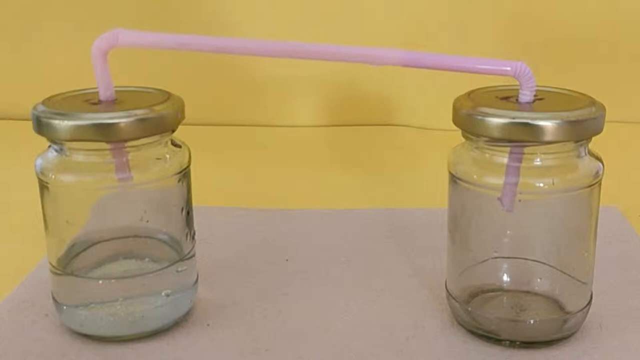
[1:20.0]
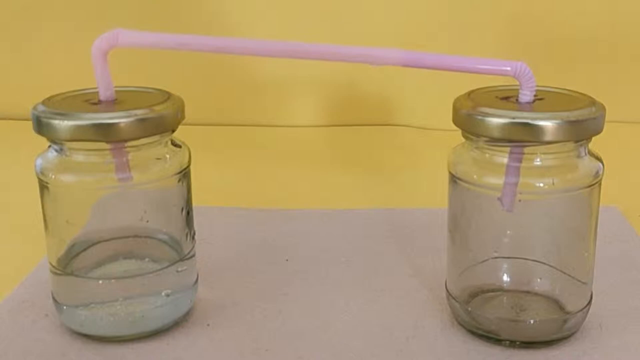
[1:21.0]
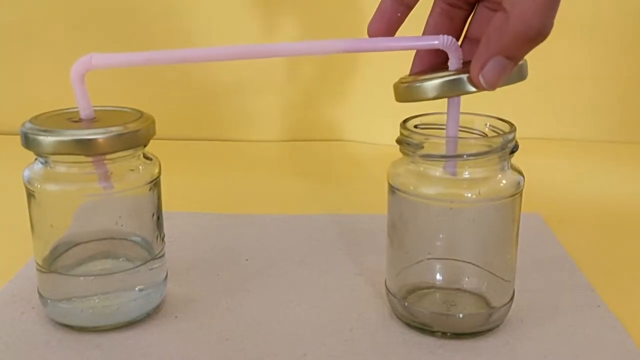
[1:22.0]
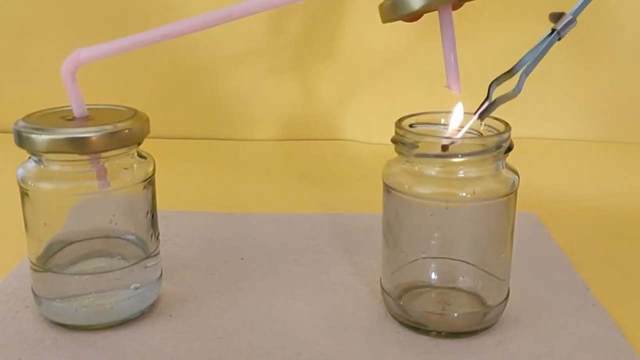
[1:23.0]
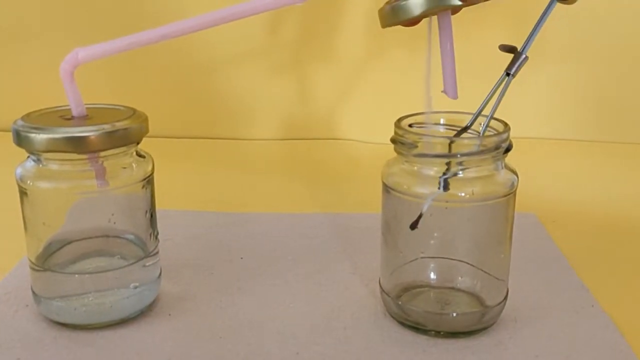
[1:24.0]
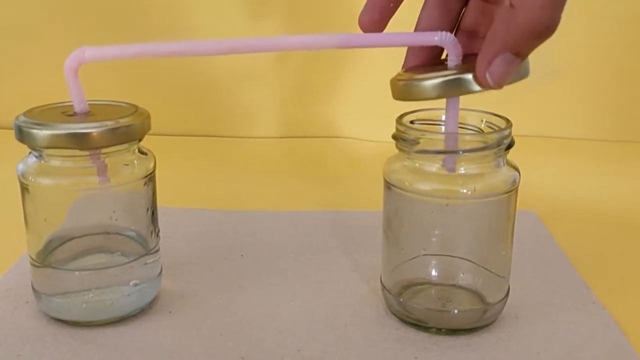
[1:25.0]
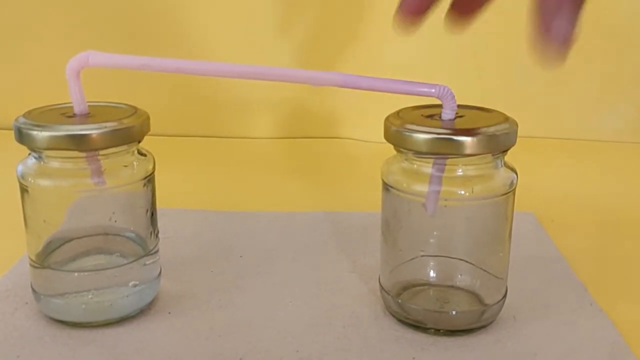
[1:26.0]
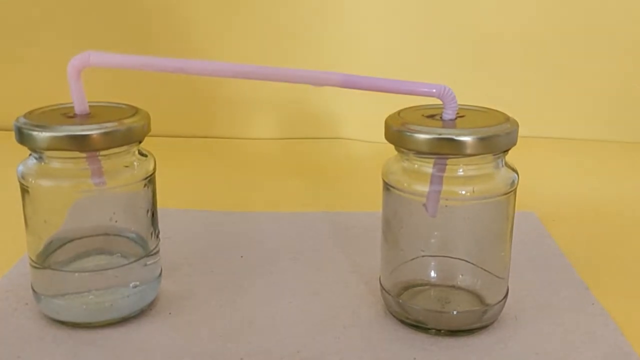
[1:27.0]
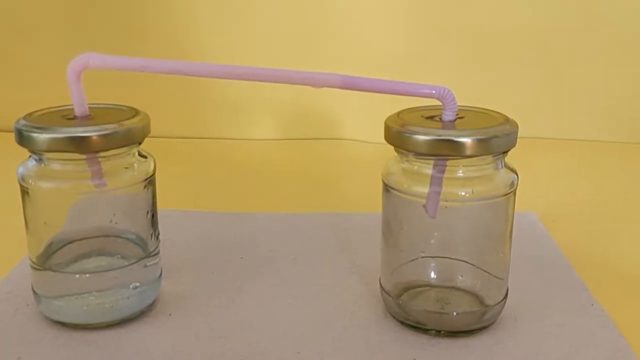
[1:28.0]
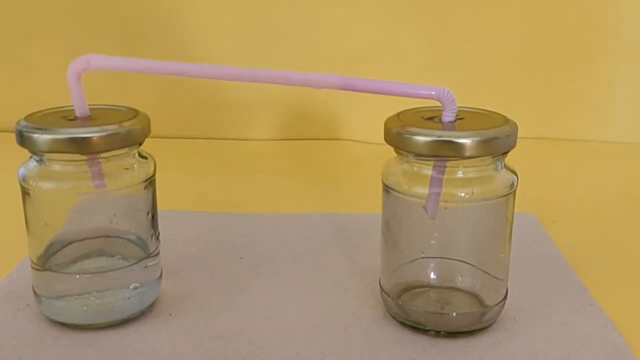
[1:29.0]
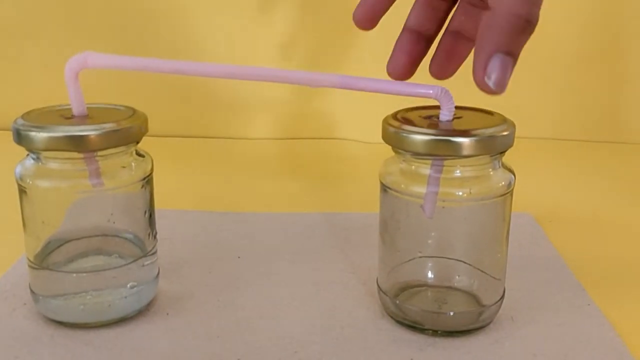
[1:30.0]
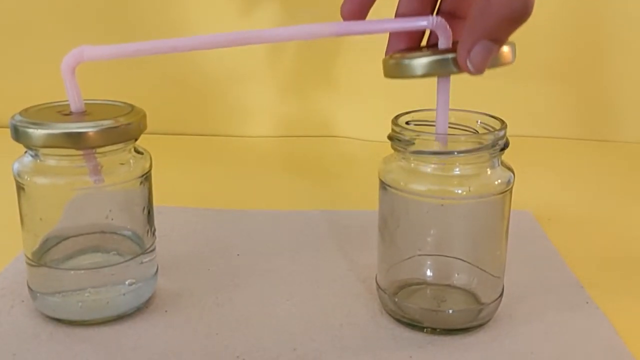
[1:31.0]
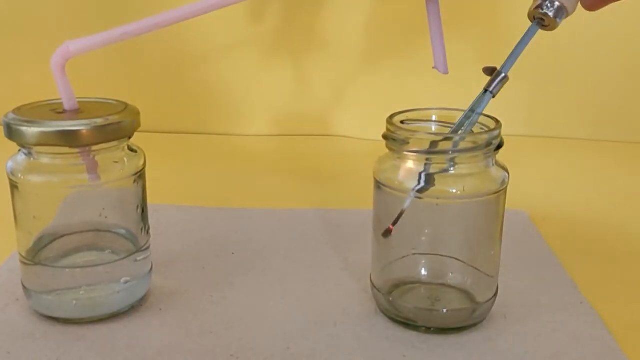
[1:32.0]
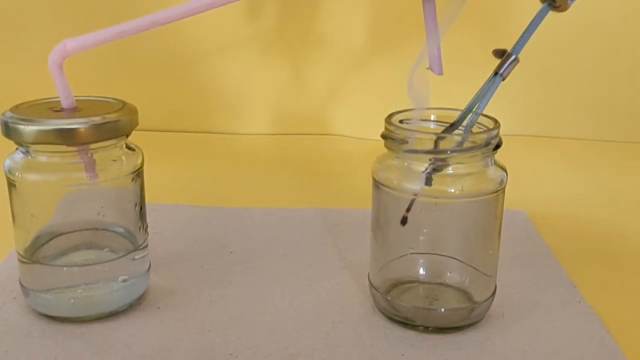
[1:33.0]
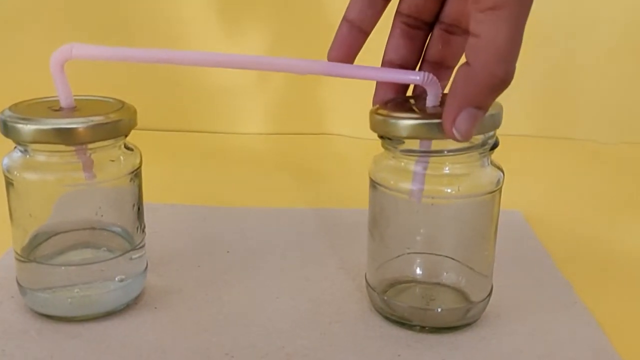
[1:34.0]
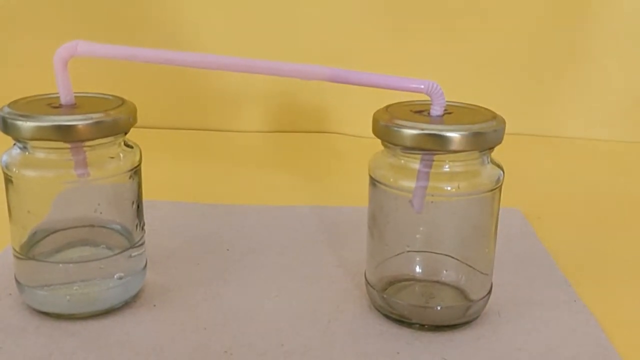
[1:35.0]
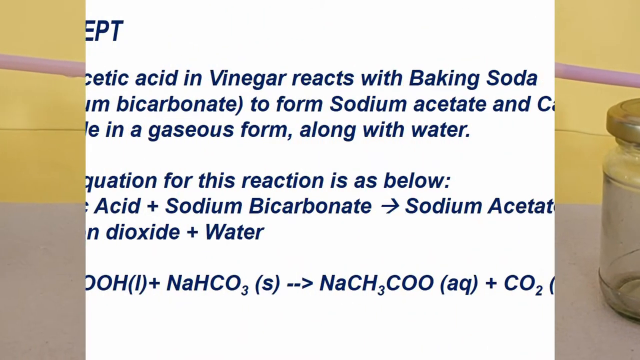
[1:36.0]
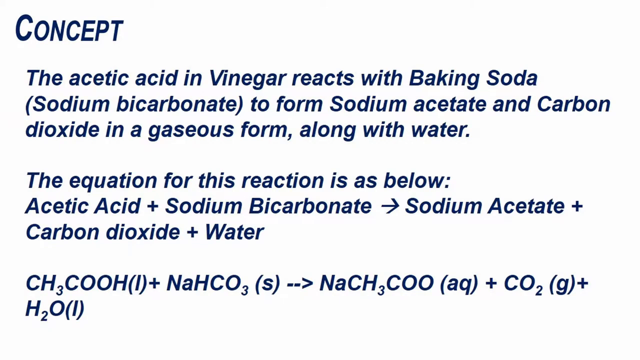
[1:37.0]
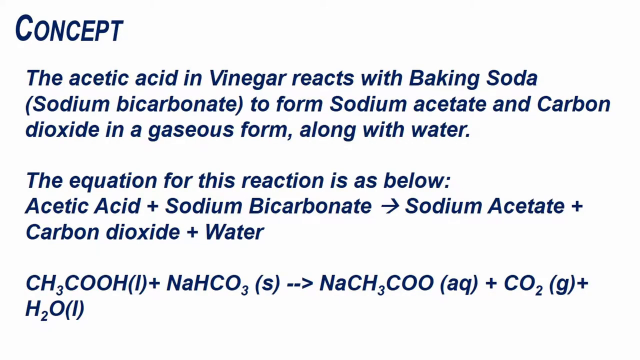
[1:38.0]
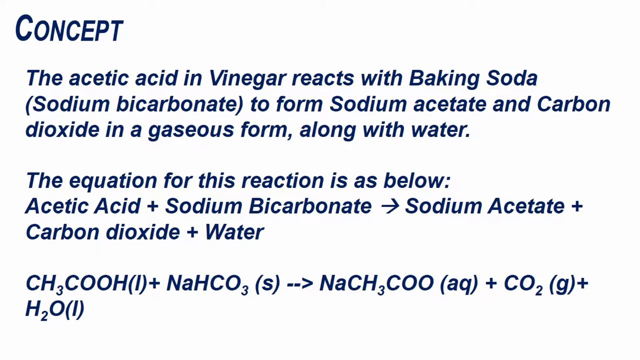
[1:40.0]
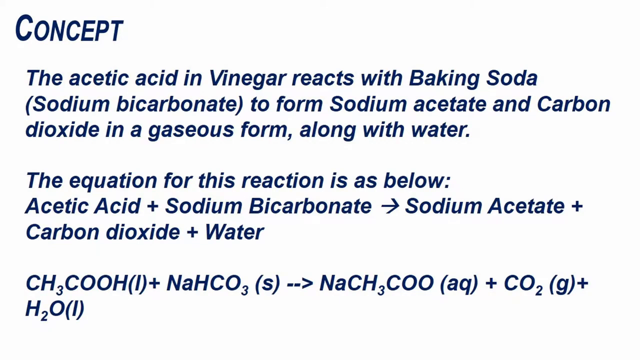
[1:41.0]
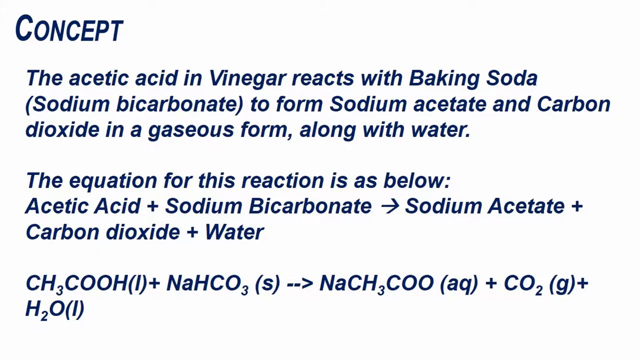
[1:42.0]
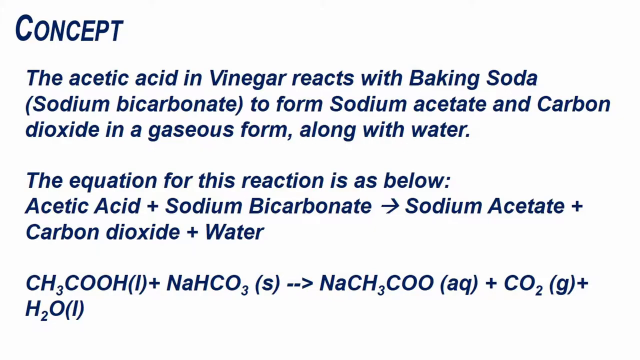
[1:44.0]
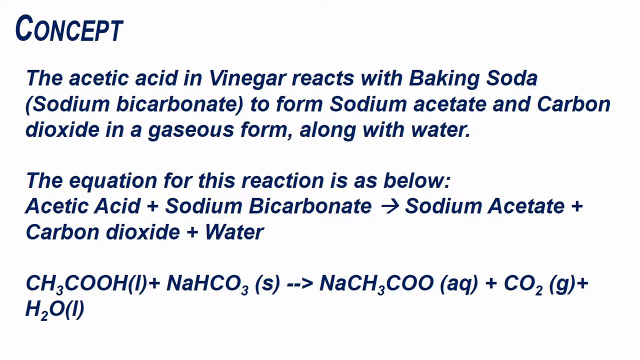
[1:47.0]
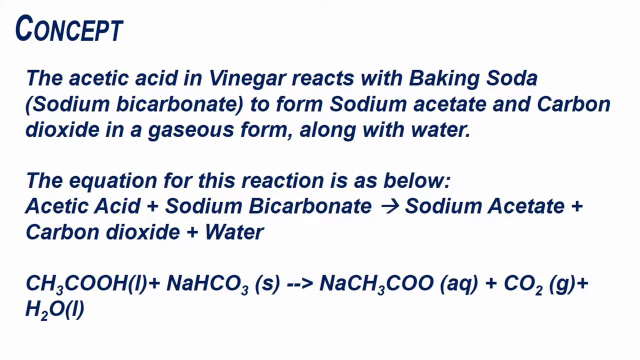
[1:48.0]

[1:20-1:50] Someone lights a match and puts it into the right mason jar, which looks empty, trying this twice. The match is attached to a pair of forceps to move it in and out of the jar. The flame consistently goes out as soon as the match is touched into the base of the jar on the inside, suggesting the jar holds something like carbon dioxide rather than oxygen. The video then switches to a slide with a white background and blue letters that says "concept" and reads "The acetic acid in vinegar reacts with baking soda, sodium bicarbonate to form sodium acetate and carbon dioxide in a gaseous form along with water. The equation for this reaction is as below:", followed by acetic acid and sodium bicarbonate to sodium acetate plus carbon dioxide plus water. Below that is the chemical equation "CH3COOH + NaHCO3" turning into "NaCH3COO", CO2 gas and H2O liquid.